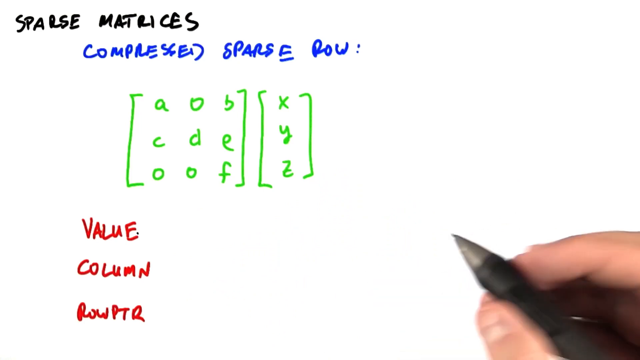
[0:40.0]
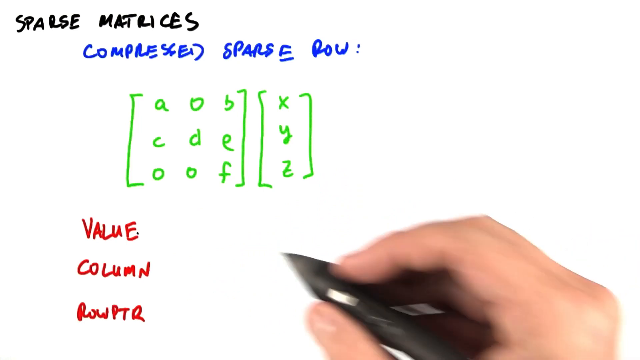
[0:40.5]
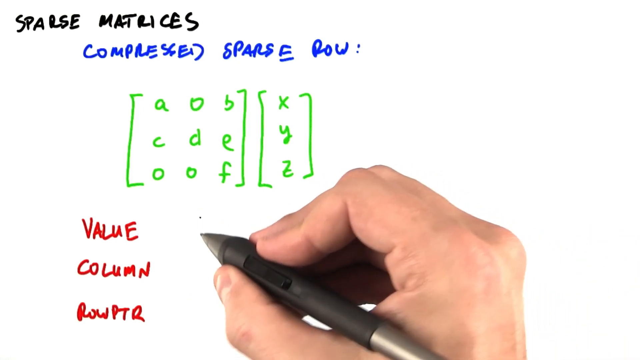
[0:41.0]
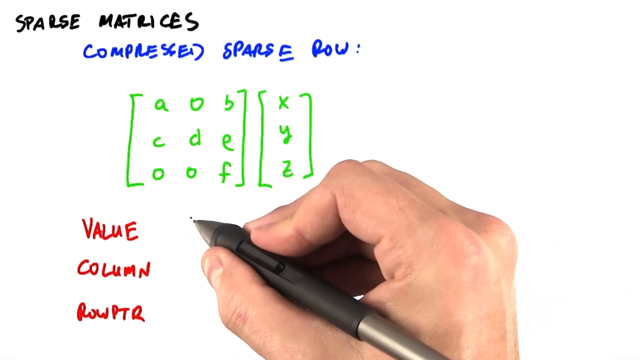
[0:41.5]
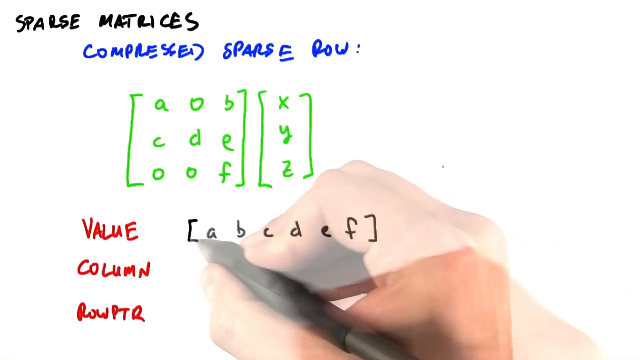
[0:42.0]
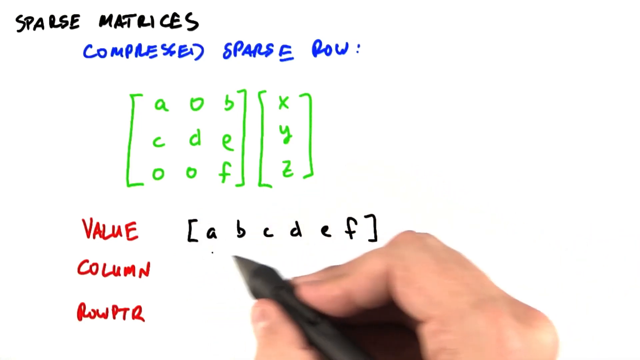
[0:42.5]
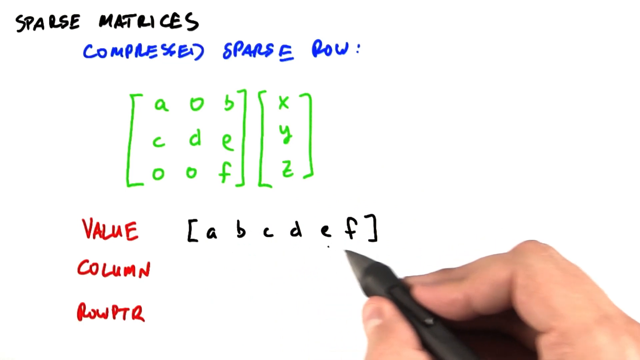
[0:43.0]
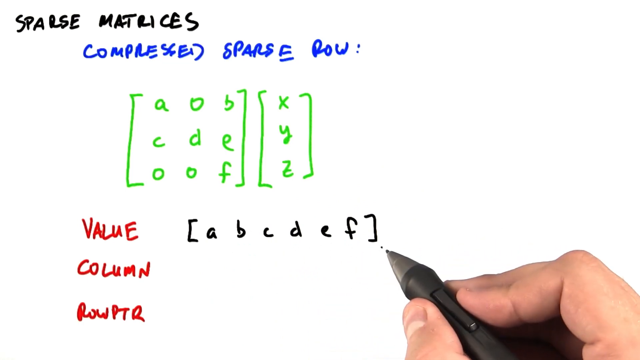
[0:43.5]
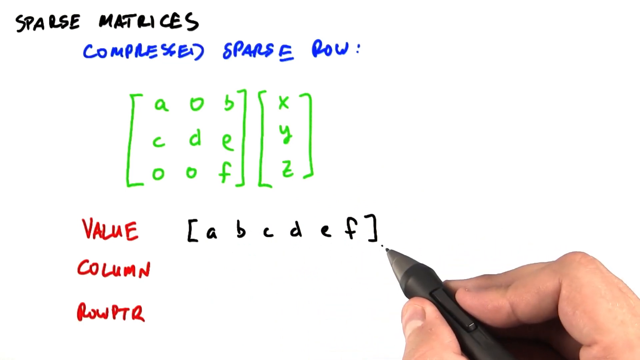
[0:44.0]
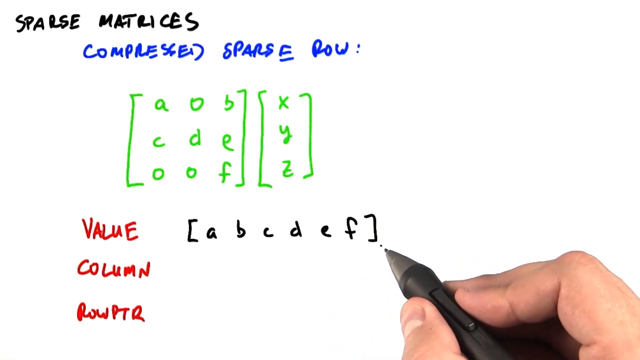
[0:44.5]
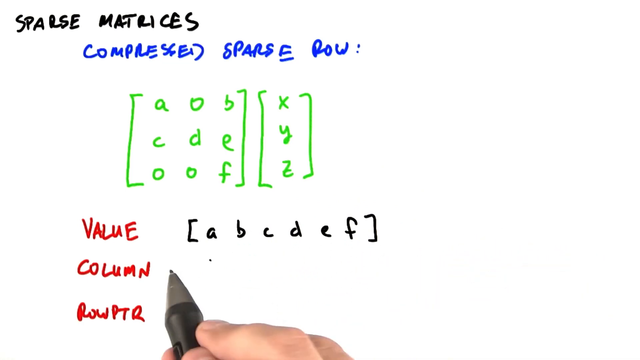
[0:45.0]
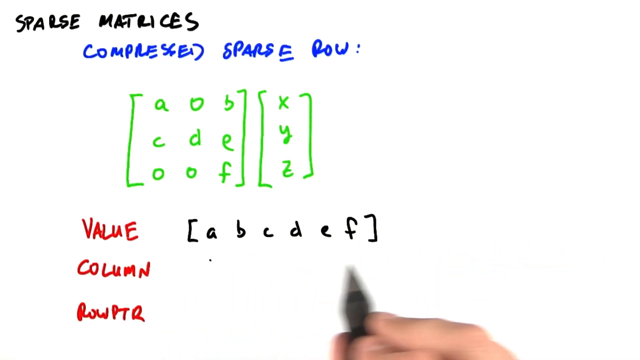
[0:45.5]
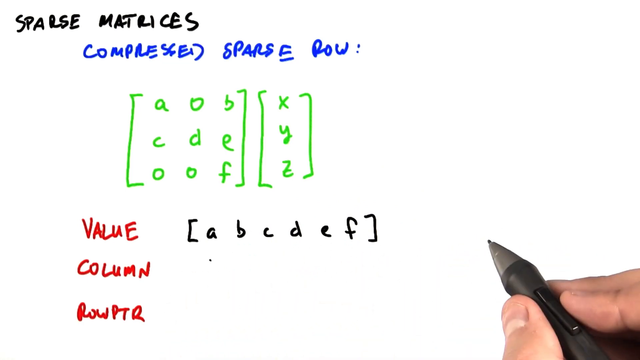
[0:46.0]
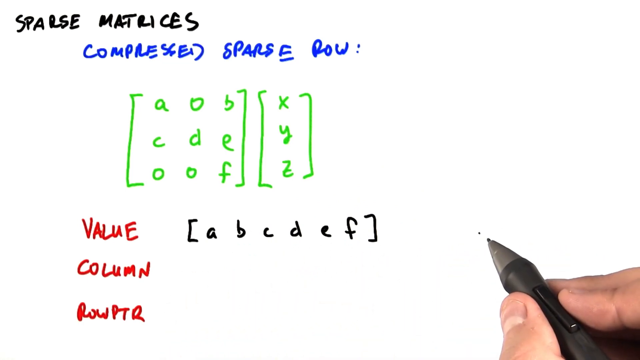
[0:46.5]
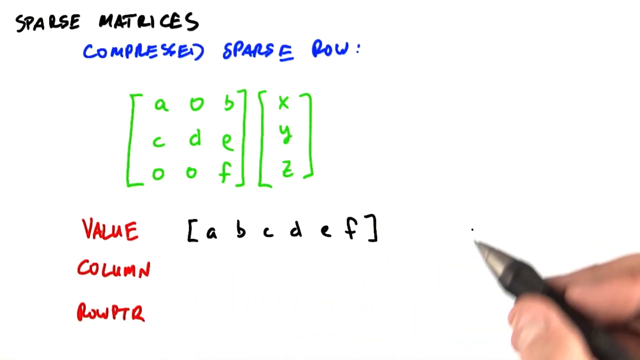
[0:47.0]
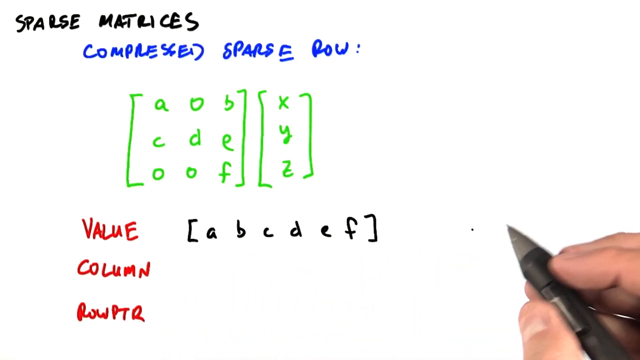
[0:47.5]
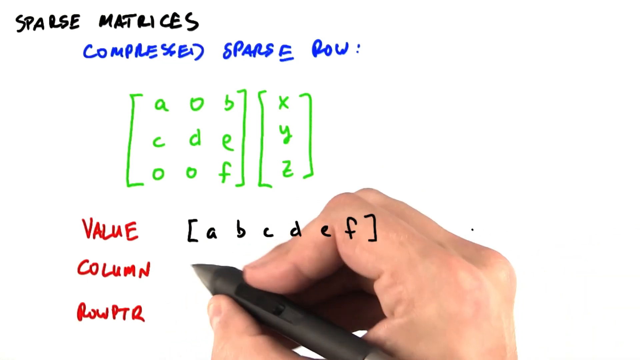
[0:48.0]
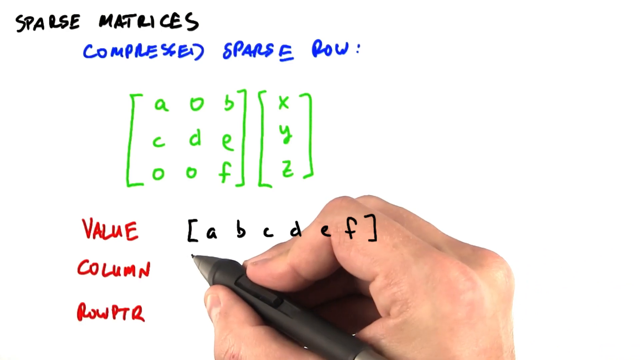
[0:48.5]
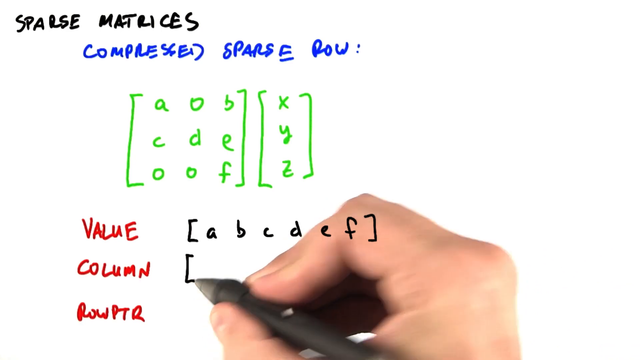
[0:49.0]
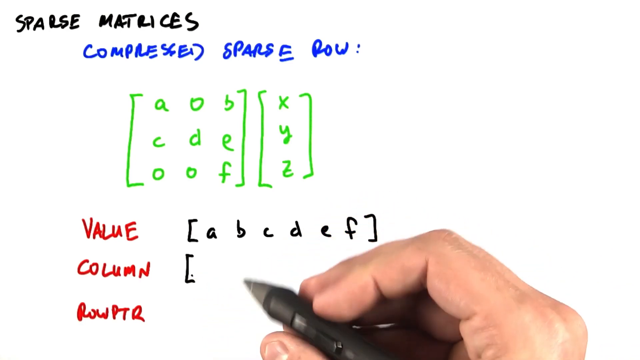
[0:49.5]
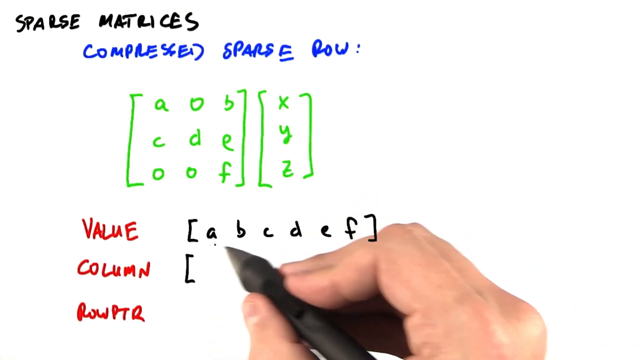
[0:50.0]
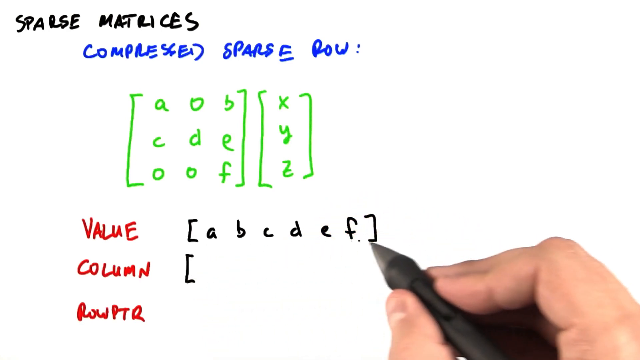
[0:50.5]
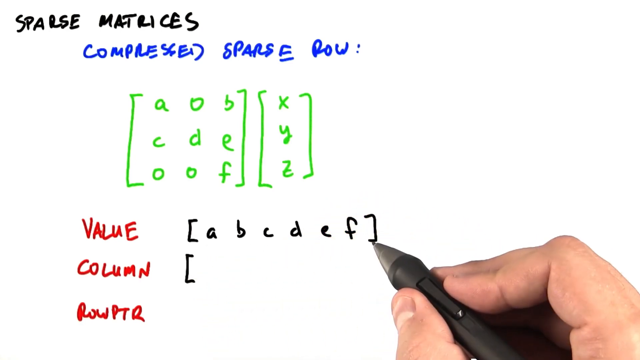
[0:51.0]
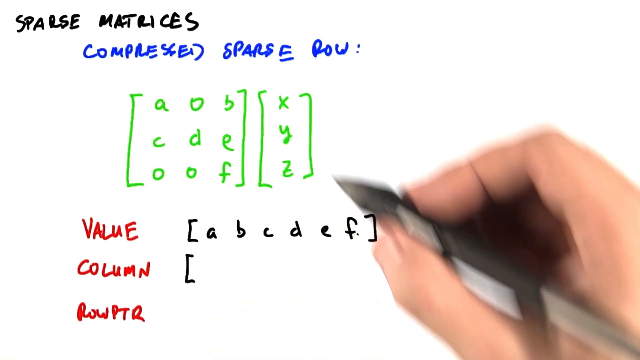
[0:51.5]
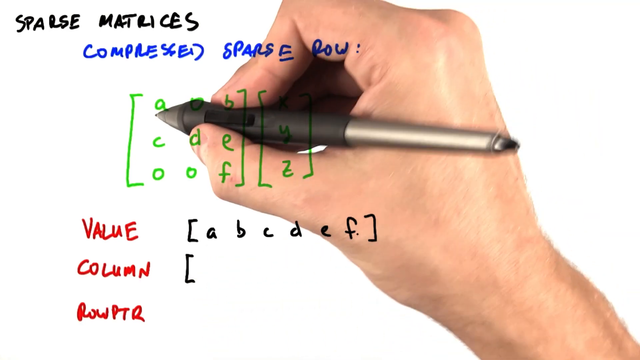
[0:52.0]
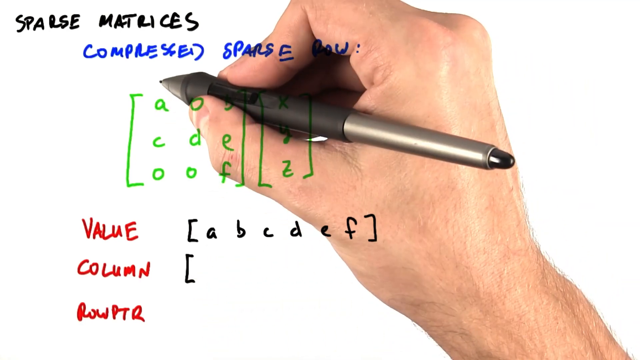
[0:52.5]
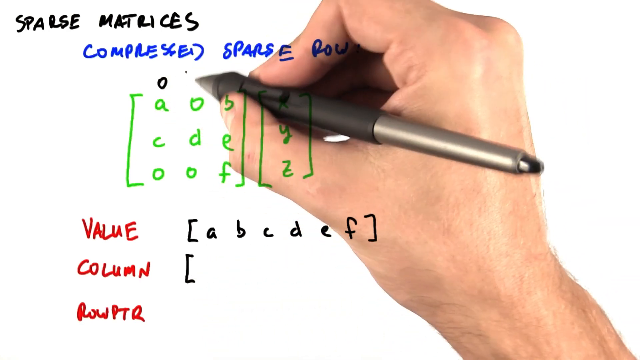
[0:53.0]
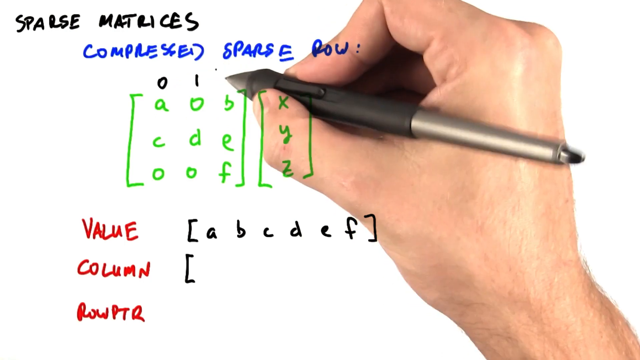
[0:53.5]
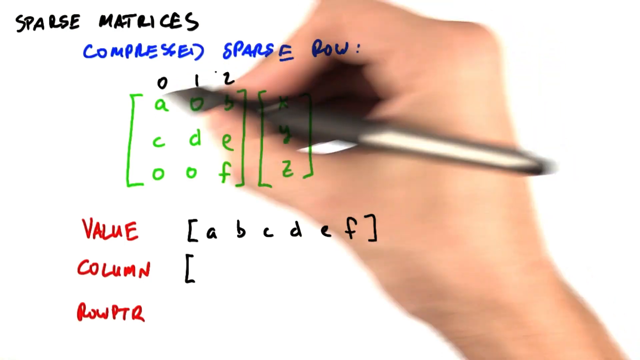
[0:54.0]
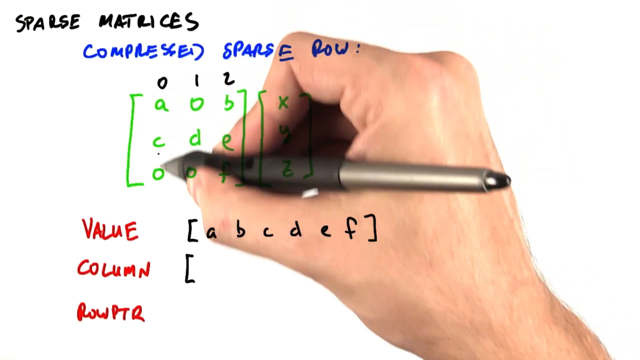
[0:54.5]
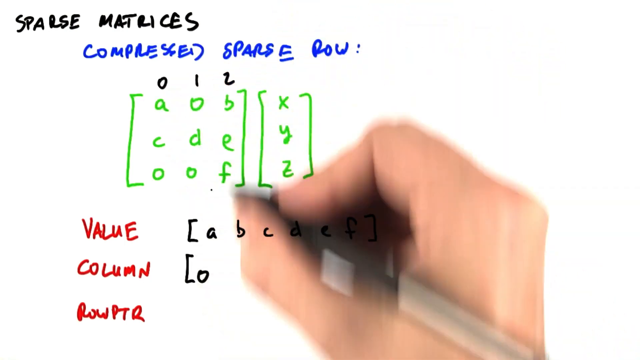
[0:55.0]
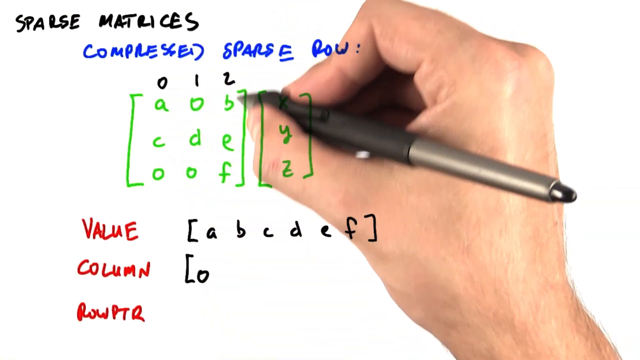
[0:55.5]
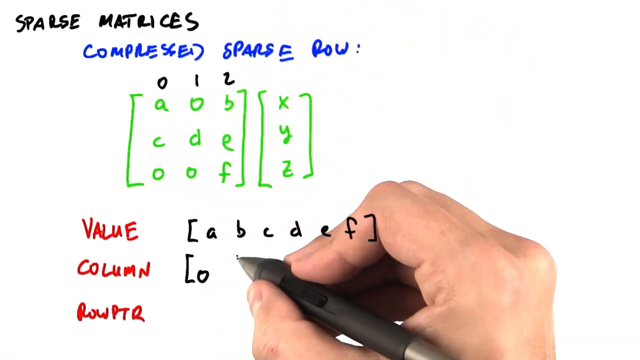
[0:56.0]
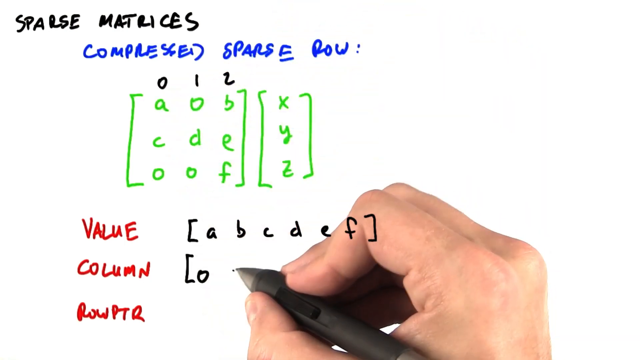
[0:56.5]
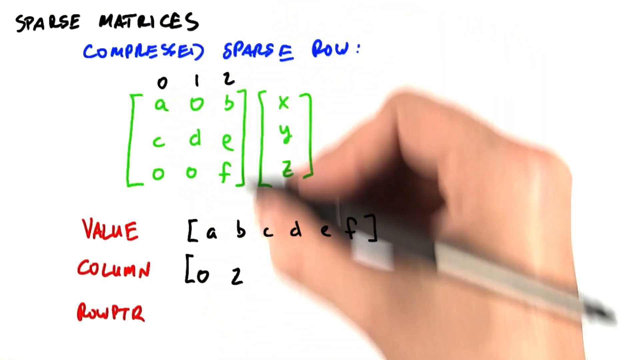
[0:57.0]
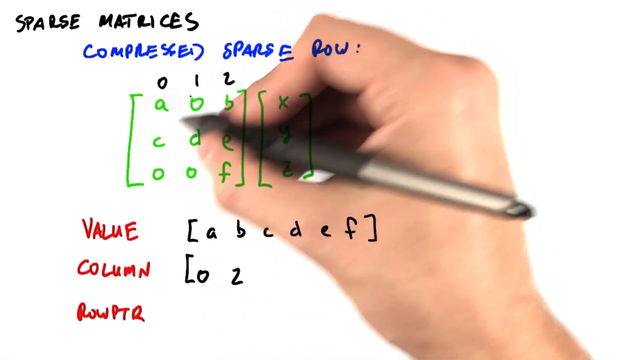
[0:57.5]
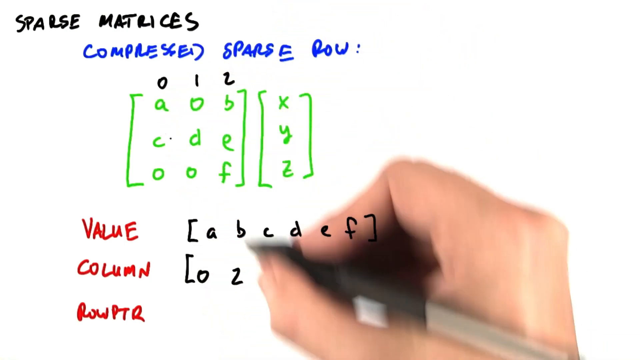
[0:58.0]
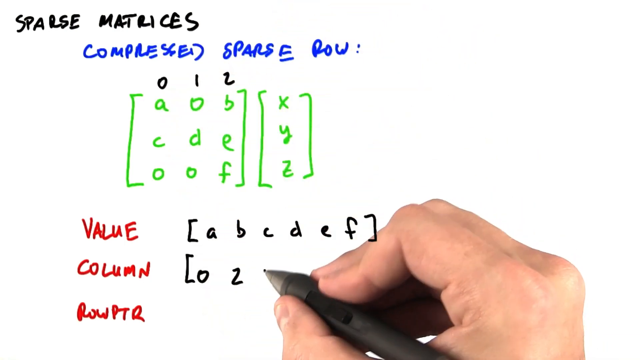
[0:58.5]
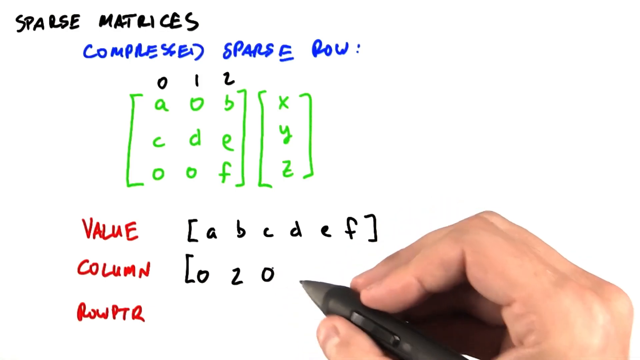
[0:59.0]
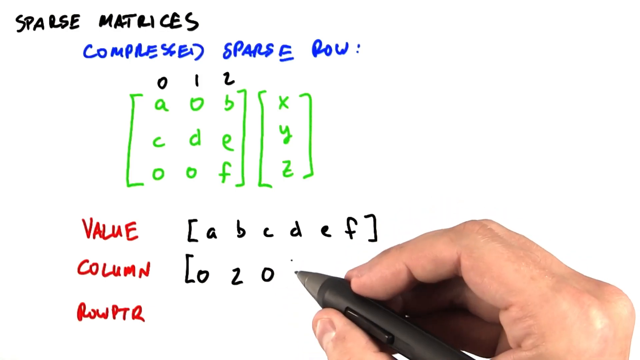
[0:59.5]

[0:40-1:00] The tutor is writing, attempting to solve the matrices. Using the pencil in black, he writes a b c d e f in small letters next to value, with a square bracket before a and after f. At column, he opens a square bracket, then goes back to the vectors and writes 0 on top of A, 1 on the next, and the number 2 on top of B. He returns to column and, after the opened square bracket, writes 0, 2, 0. As he writes, he also illustrates what he is doing on the vectors at the top. So far he has written only for column.